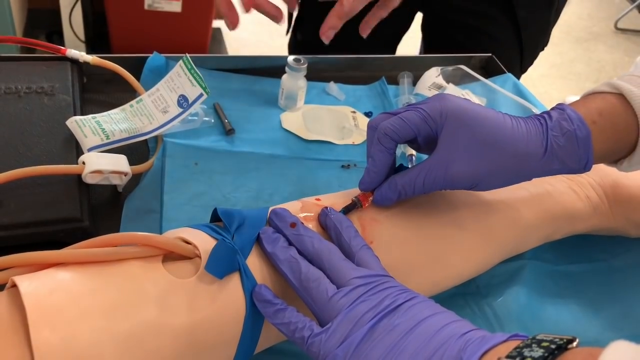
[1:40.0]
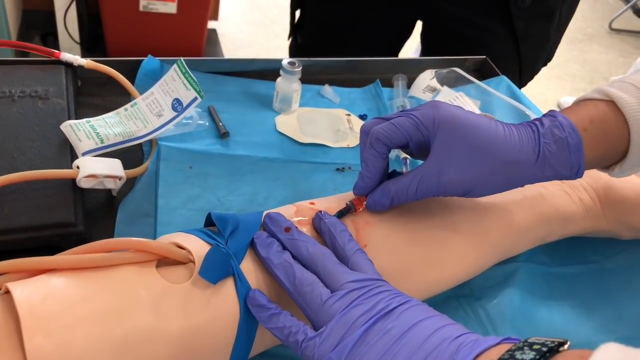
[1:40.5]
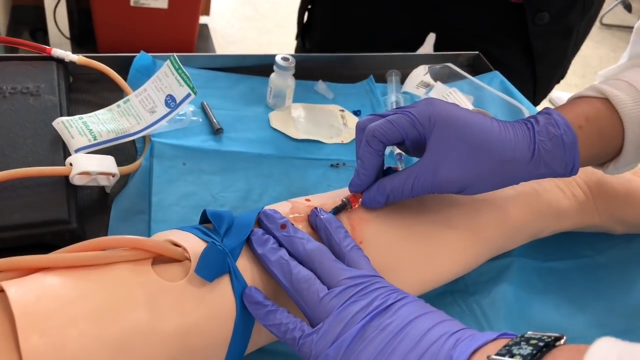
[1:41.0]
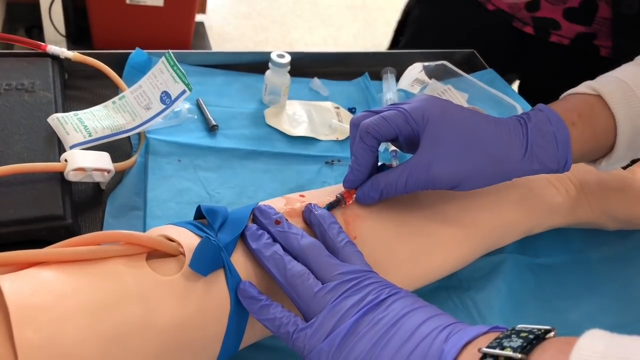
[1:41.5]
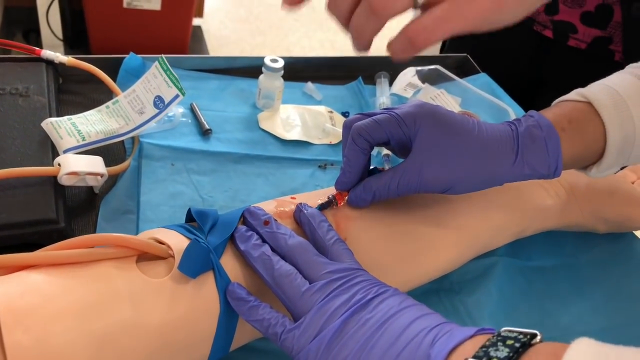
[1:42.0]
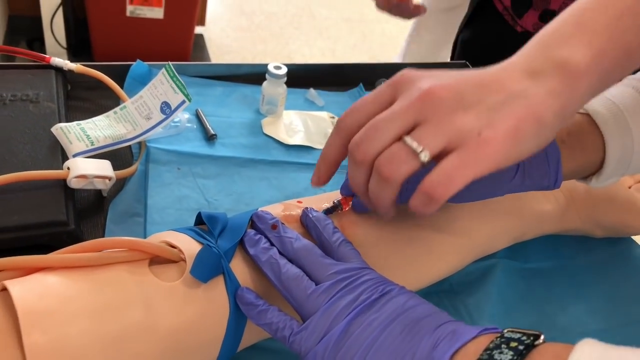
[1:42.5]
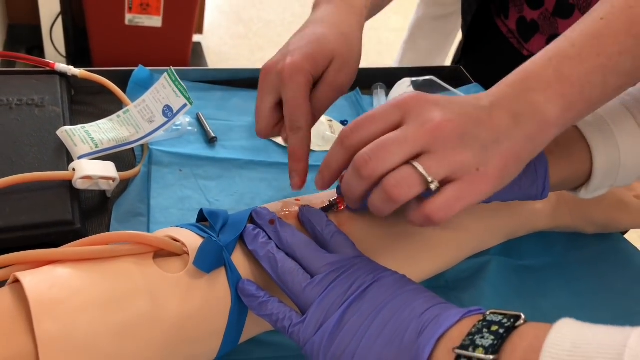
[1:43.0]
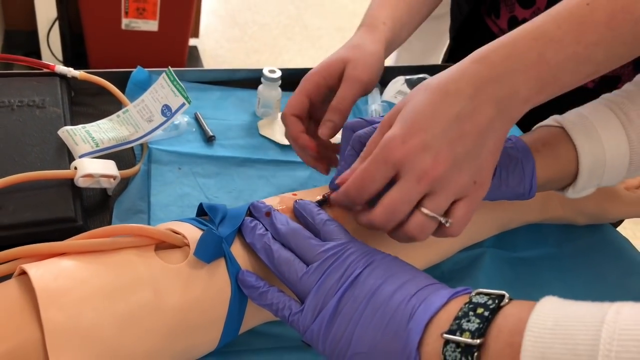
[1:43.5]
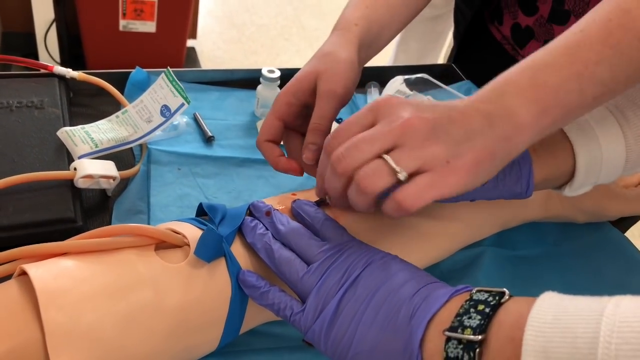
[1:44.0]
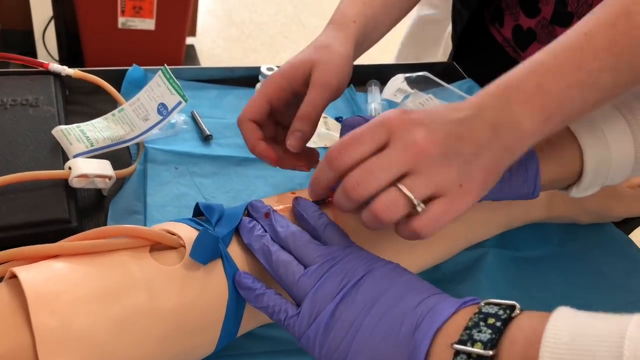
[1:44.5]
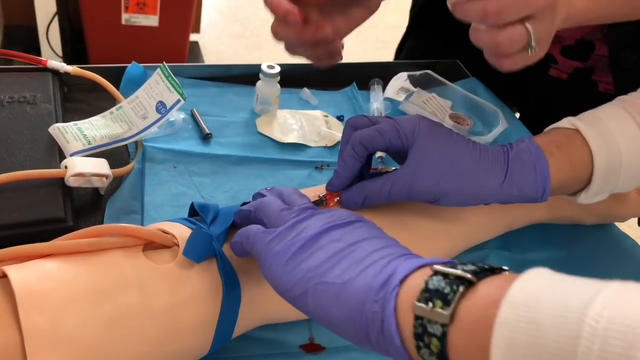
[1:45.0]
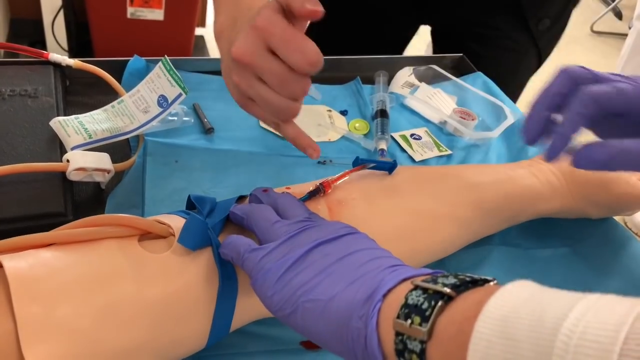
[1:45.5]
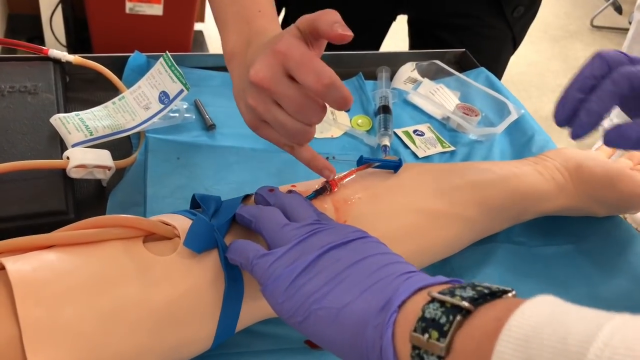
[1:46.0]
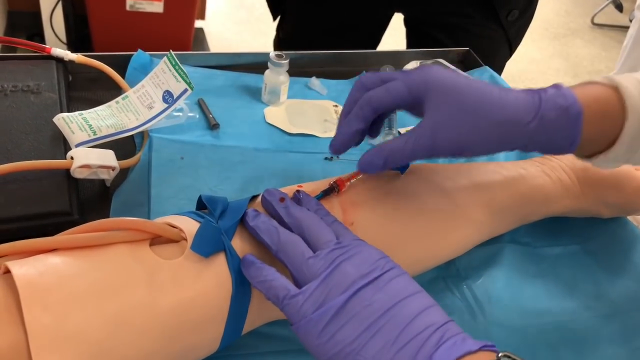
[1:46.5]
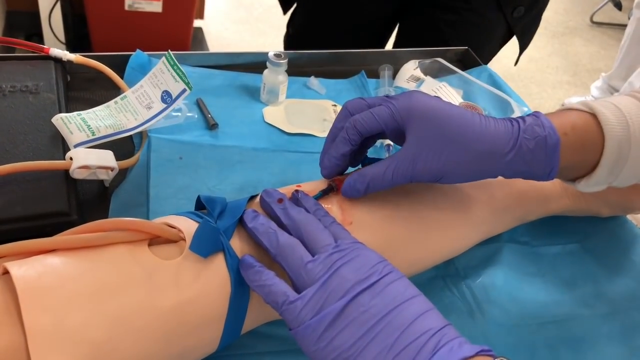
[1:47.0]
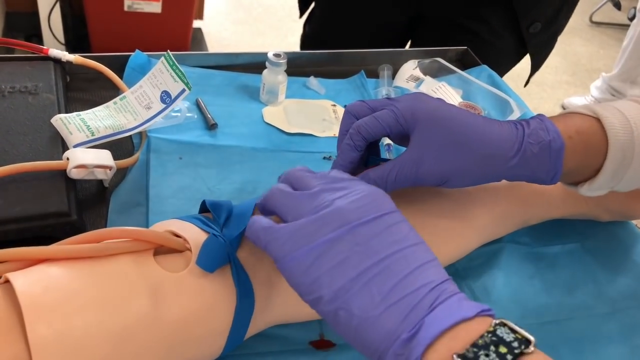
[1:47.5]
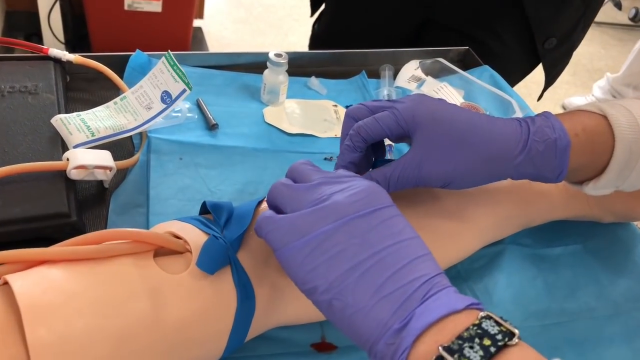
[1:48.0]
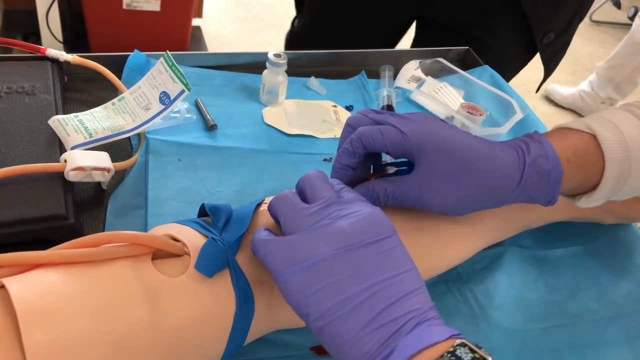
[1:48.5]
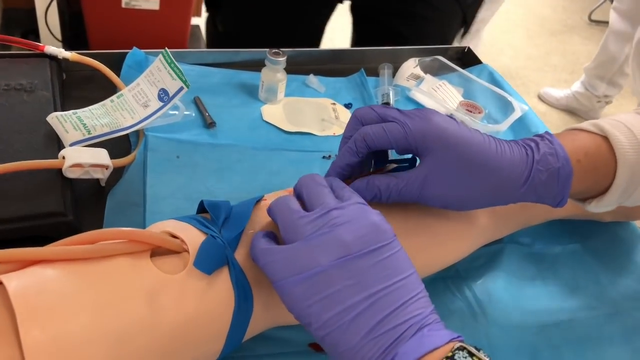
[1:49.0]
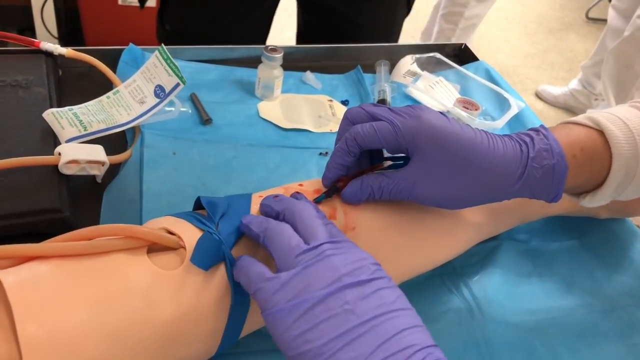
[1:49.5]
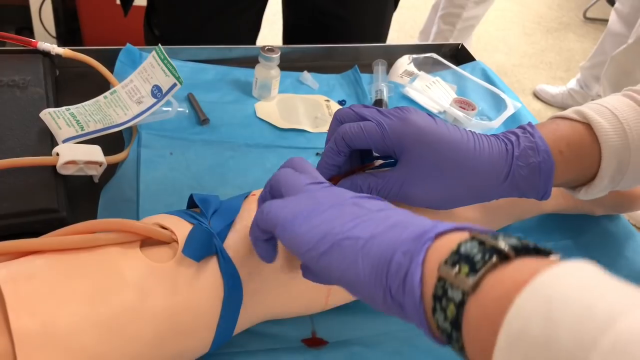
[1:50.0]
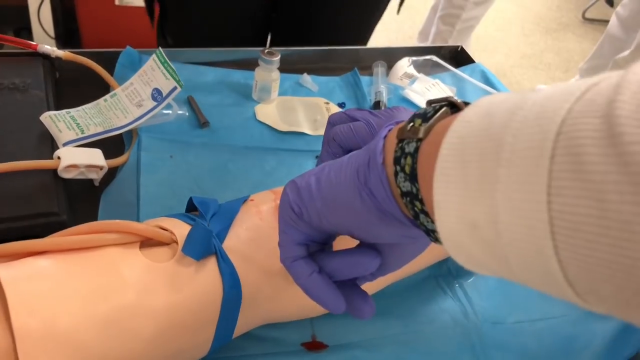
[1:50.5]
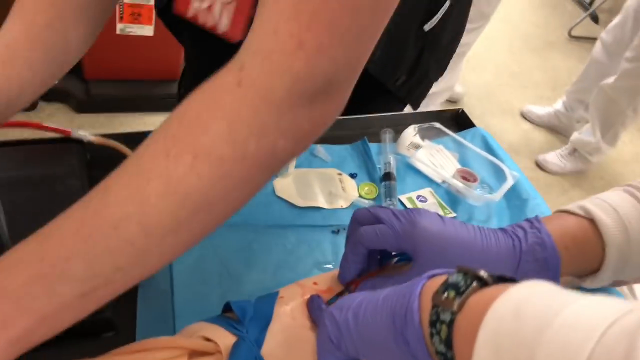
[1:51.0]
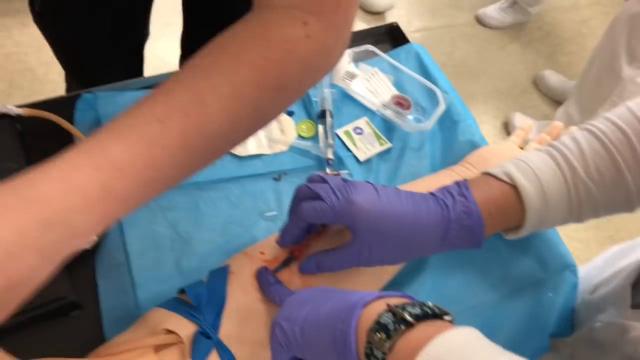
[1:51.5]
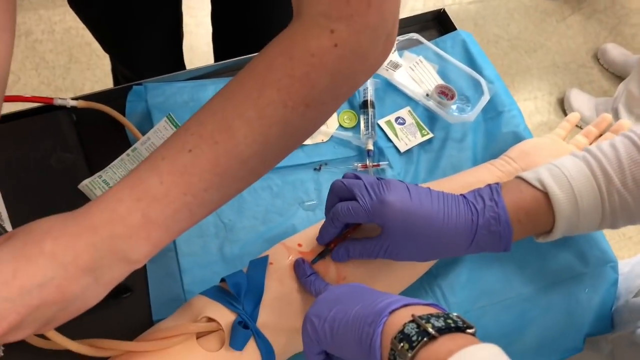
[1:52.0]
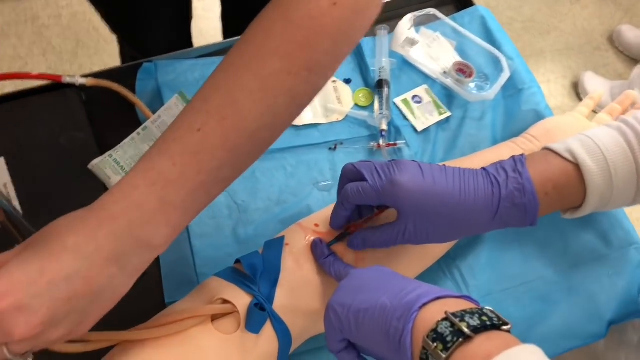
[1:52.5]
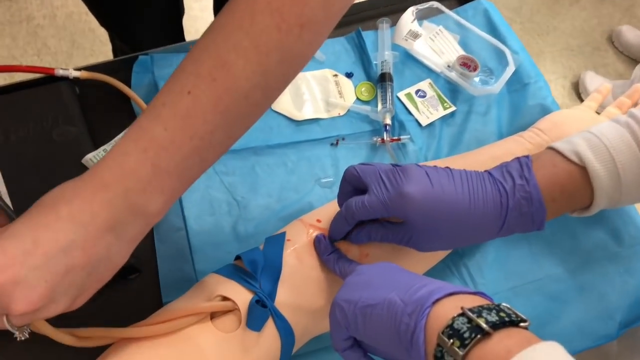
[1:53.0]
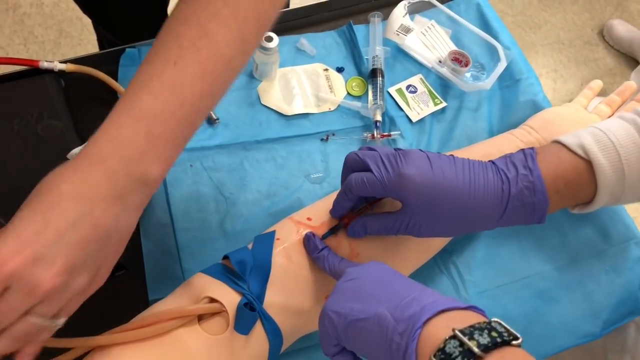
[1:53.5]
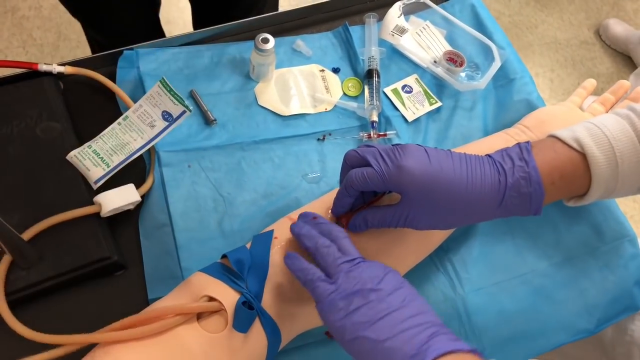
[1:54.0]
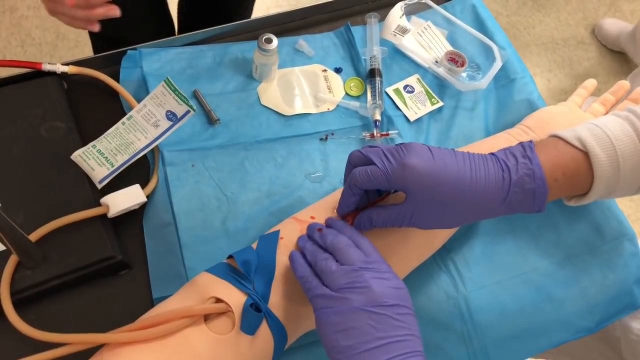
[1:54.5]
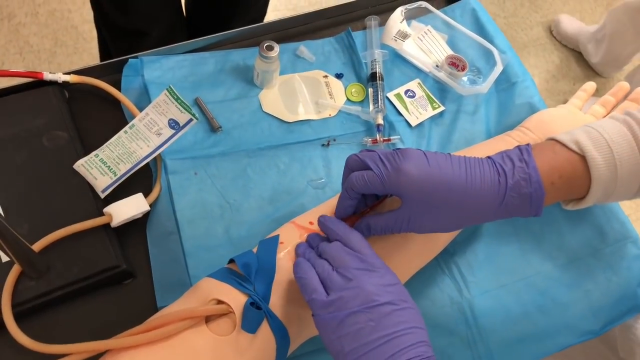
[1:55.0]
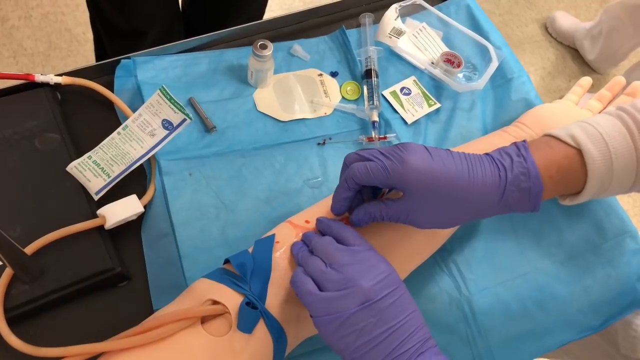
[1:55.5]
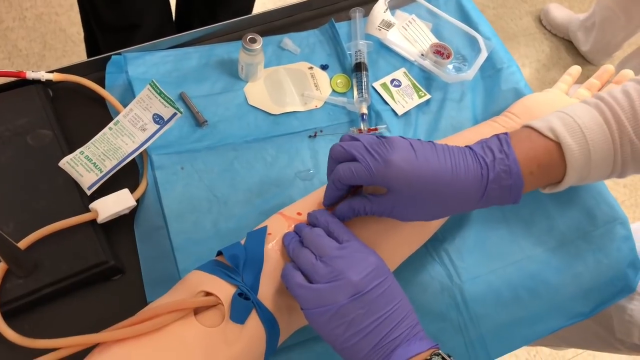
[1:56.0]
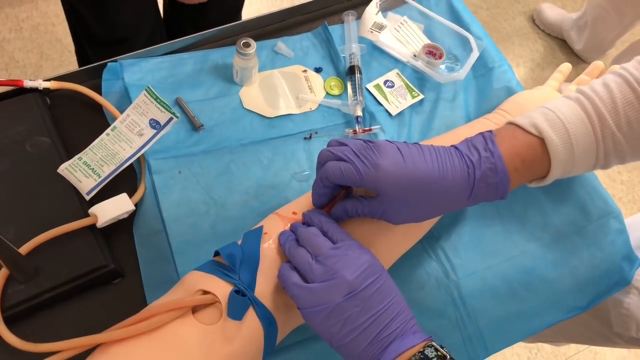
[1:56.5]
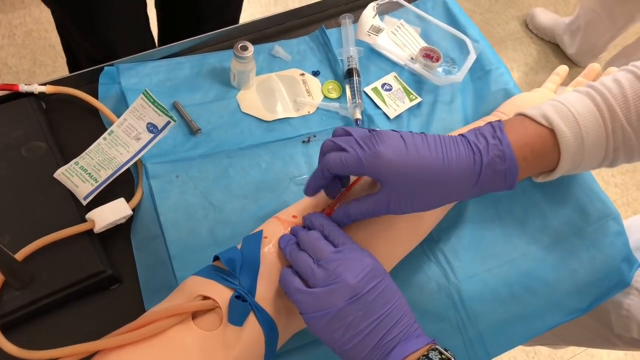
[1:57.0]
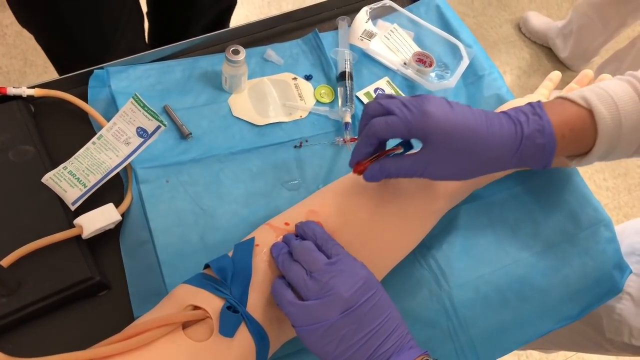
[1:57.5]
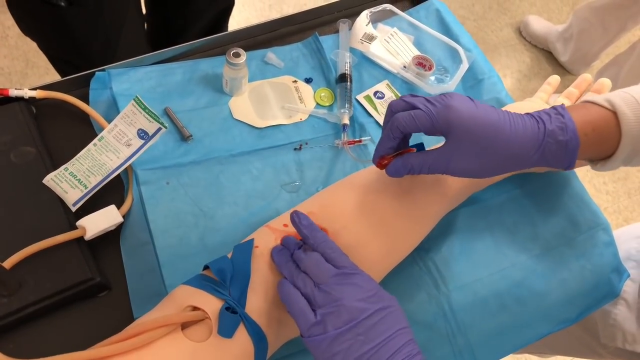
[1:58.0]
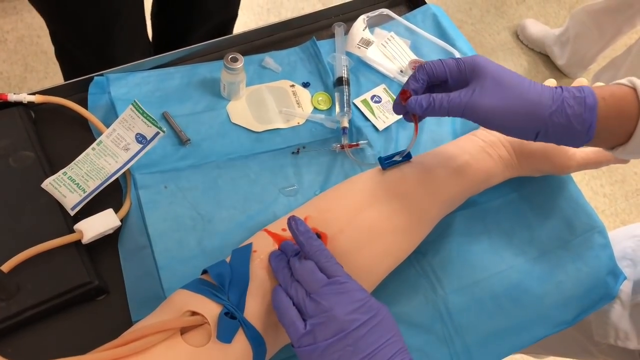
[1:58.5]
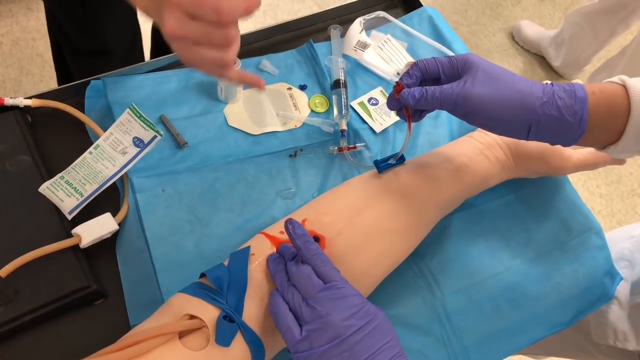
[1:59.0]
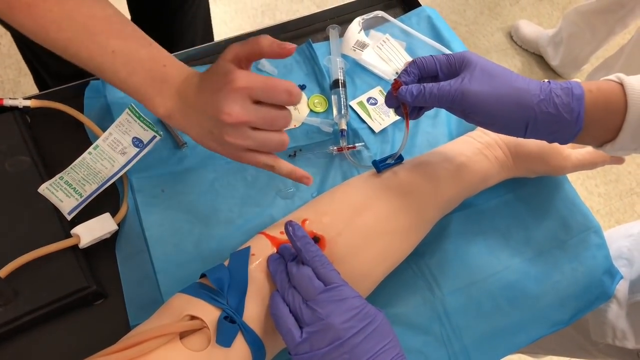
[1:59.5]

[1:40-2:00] At first only the practice phlebotomy arm and the arms and hands of a medical professional are visible. Another person walks into the shot, moving their hands as if talking and instructing the medical professional how to properly insert a needle into the practice arm, using not the pointer finger but the pinky to indicate the location and what needs to be done. This instructing assistant wears a ring on the left ring finger that appears to be silver. The medical professional takes the tube from the needle while the needle is still in the practice arm and replaces it with another tube, and red liquid spews out of the attachment point between the tube and the needle as the tube is replaced. The camera view changes from a side view to an aerial view of the practice arm and the work the medical professional and assistant are doing.